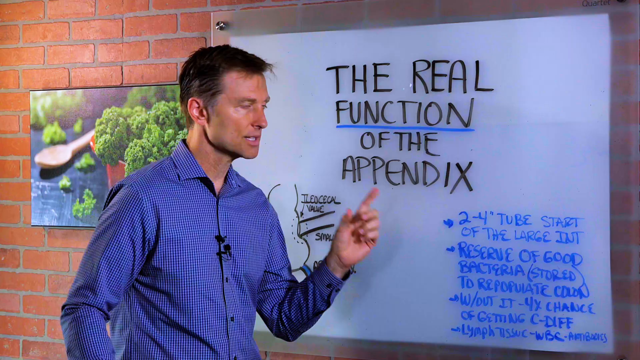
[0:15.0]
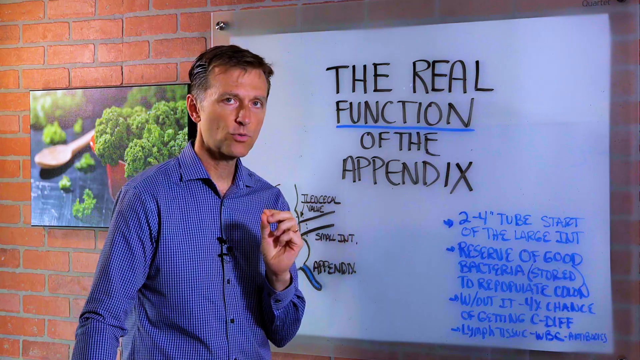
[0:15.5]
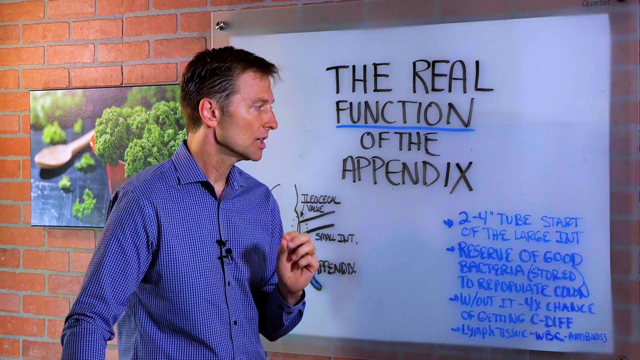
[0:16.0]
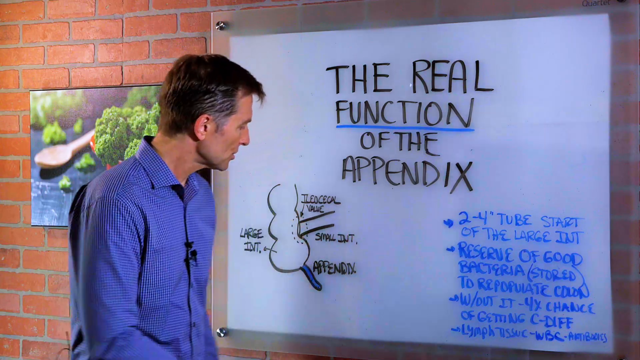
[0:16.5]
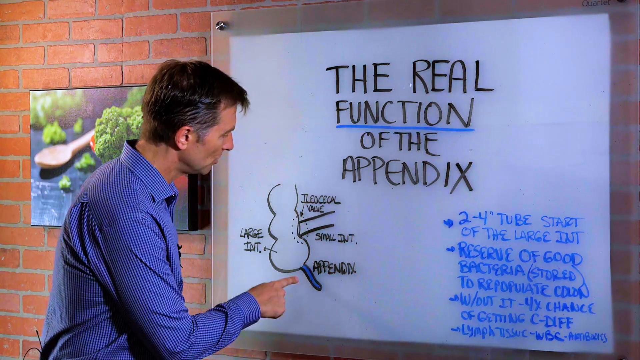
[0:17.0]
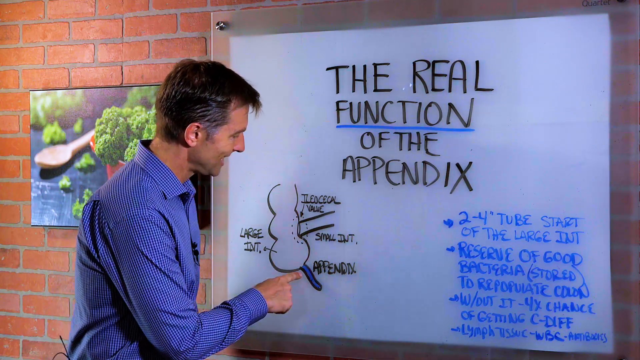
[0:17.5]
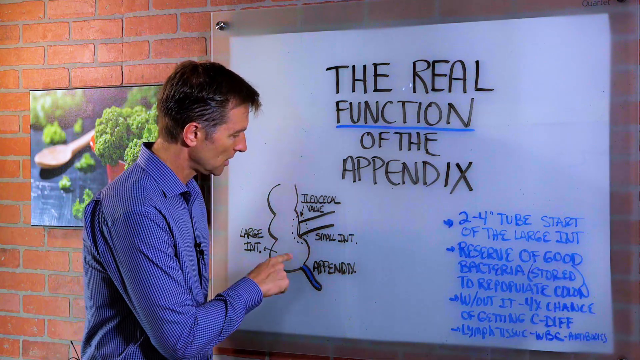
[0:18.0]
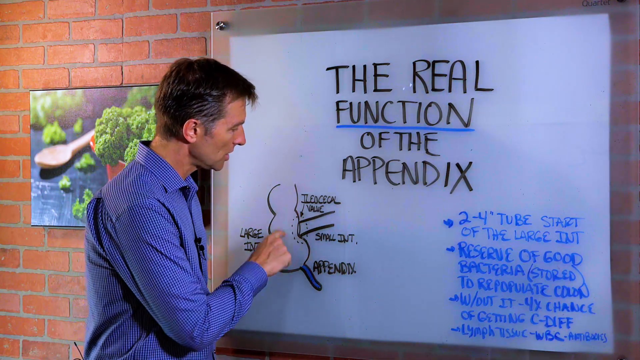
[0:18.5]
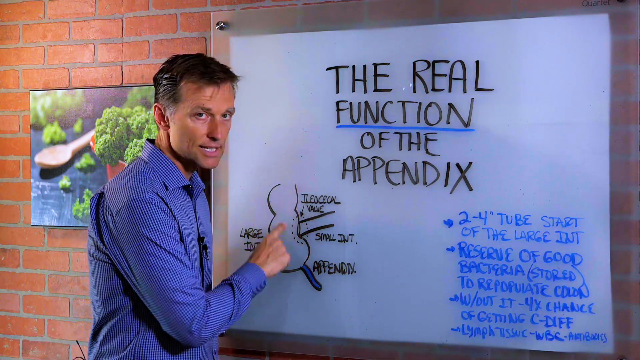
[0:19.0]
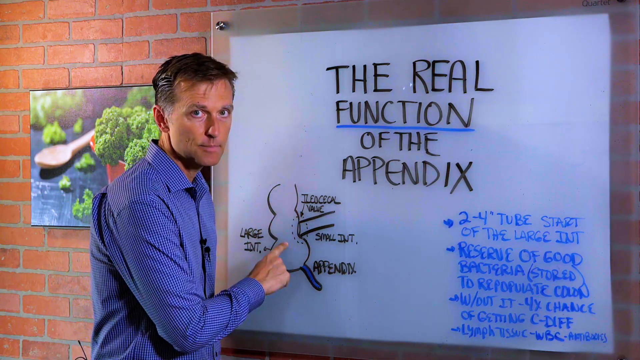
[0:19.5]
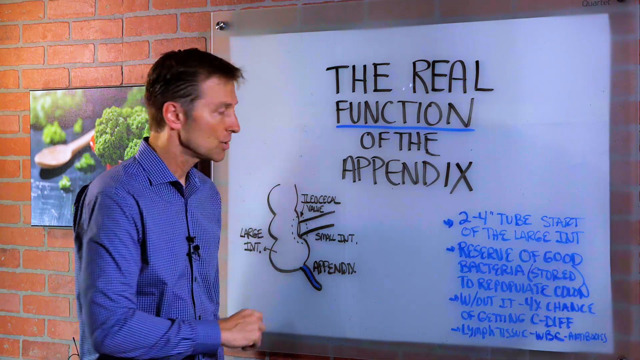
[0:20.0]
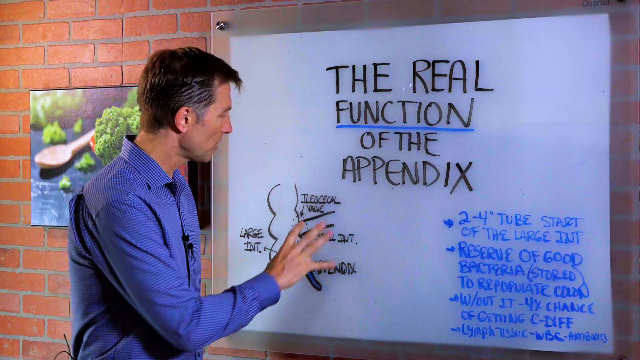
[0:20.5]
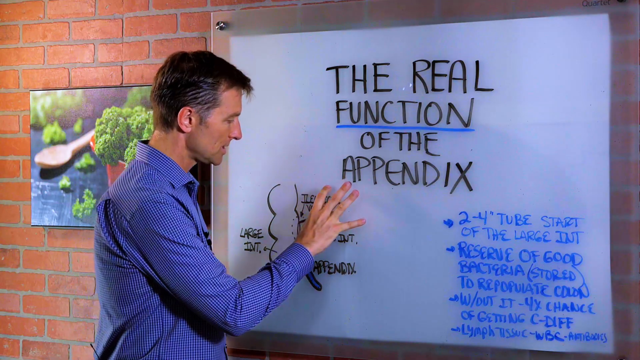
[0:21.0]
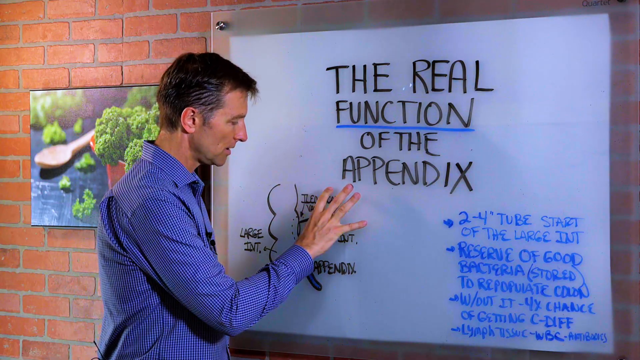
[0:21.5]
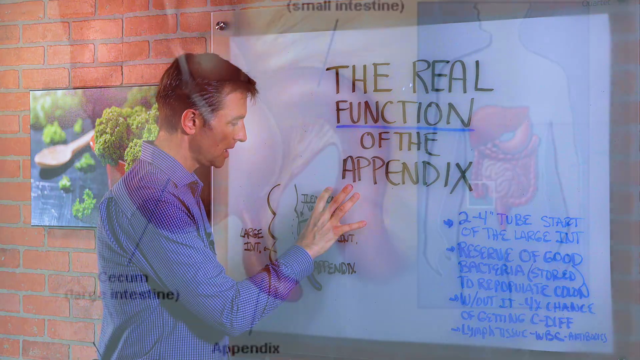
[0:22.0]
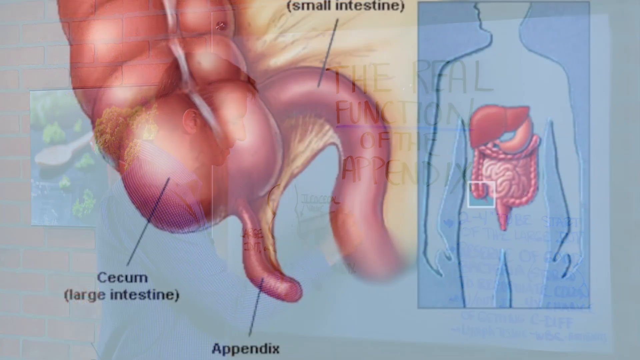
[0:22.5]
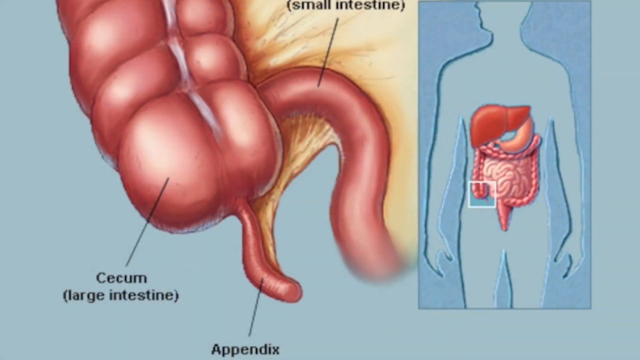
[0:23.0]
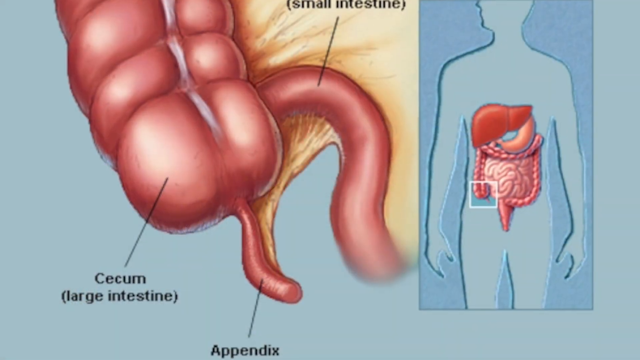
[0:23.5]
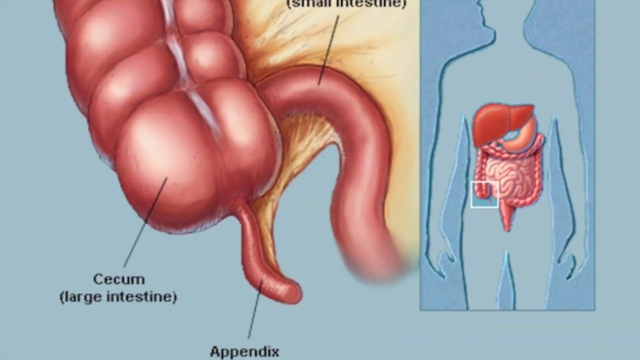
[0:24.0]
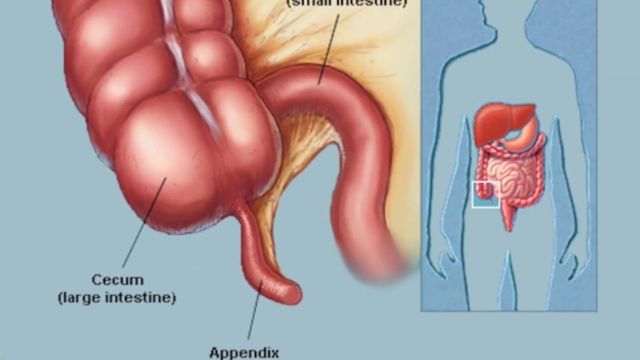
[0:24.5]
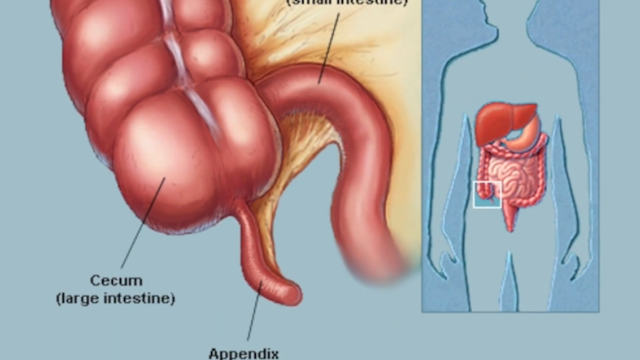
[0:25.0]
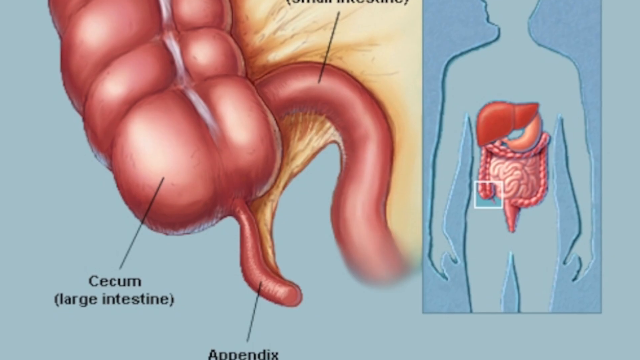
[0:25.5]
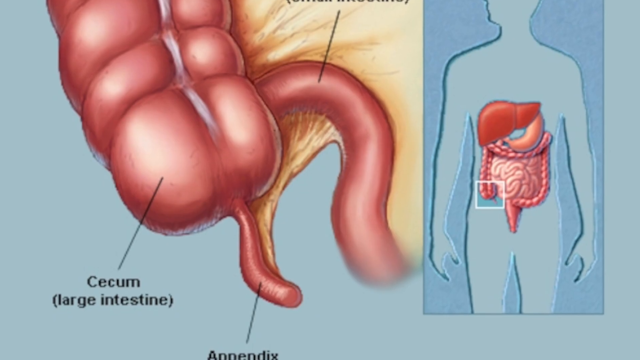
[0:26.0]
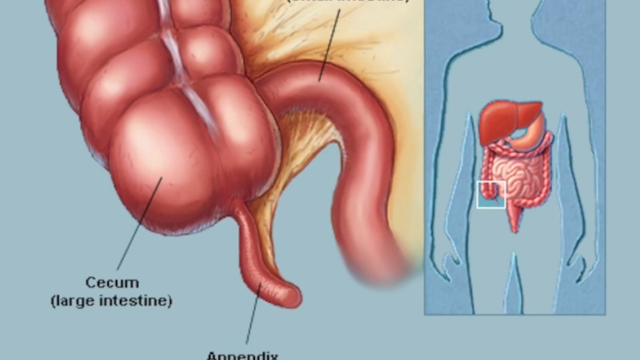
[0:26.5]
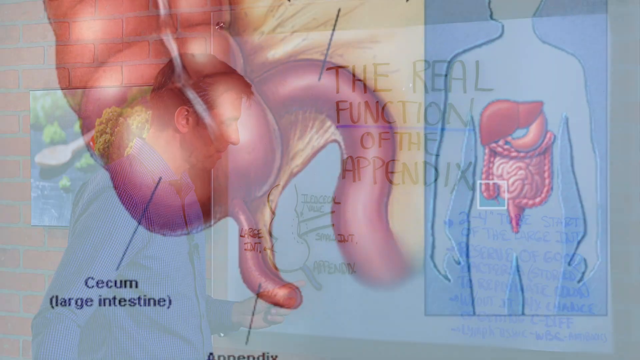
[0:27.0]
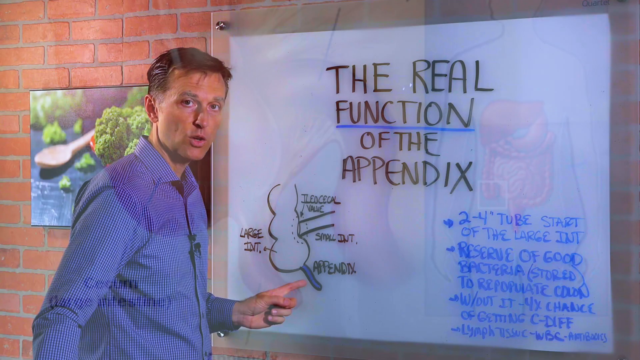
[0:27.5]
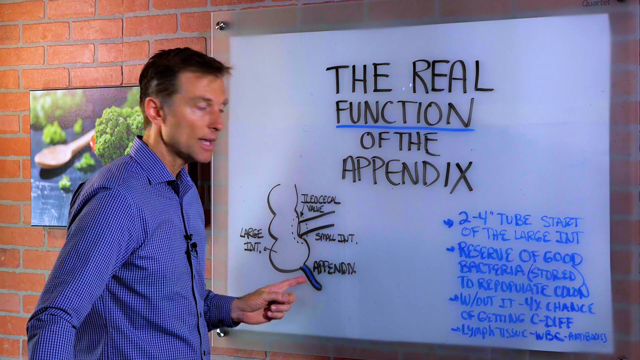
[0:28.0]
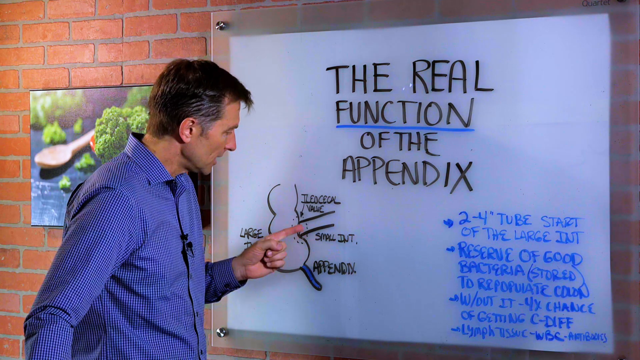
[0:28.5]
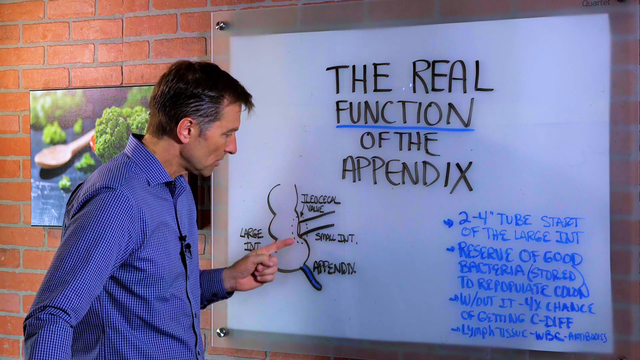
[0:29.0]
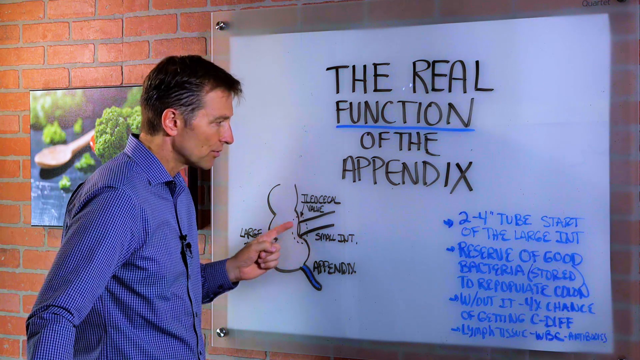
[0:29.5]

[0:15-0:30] The video is titled "the real function of the appendix" and appears to be by Dr. Berg, the man on screen. He wears a nice blue long-sleeve shirt whose pattern is hard to make out, apparently stripes. On the white surface behind him is a drawing of the large intestine and the appendix: the large intestine looks like a snowman with no hat or arms, and the appendix is a weird little squiggle coming from underneath it, like a little worm squiggling out the bottom. The squiggle is coloured in blue, with "appendix" written next to it. Text on the board includes "a two to four inch tube" and mentions good bacteria and the colon. At the top it reads "the real function of the appendix", with "function" underlined in blue.